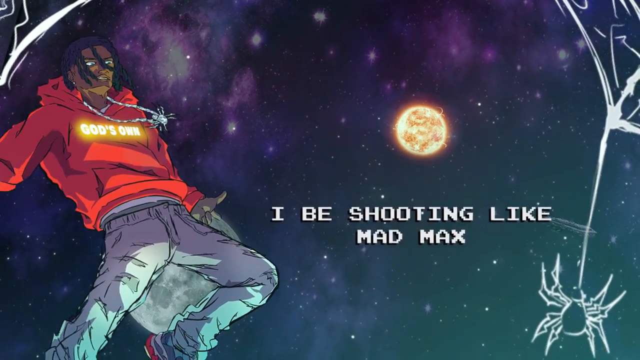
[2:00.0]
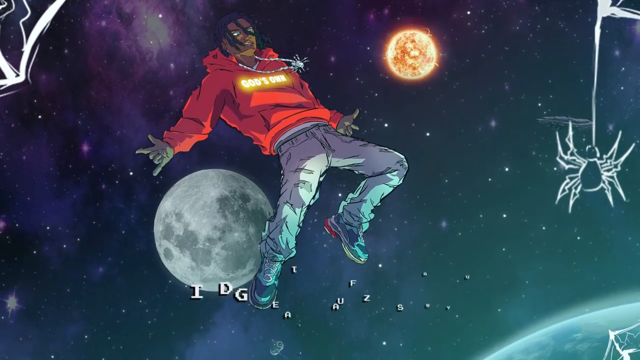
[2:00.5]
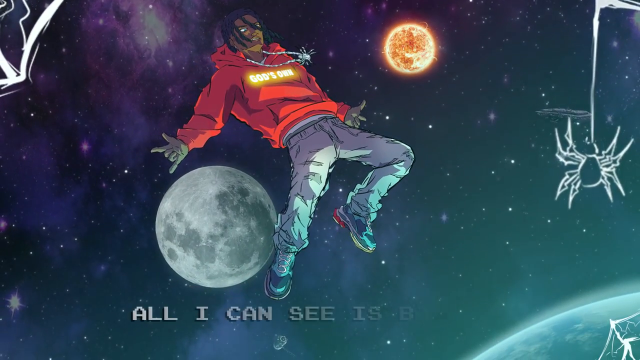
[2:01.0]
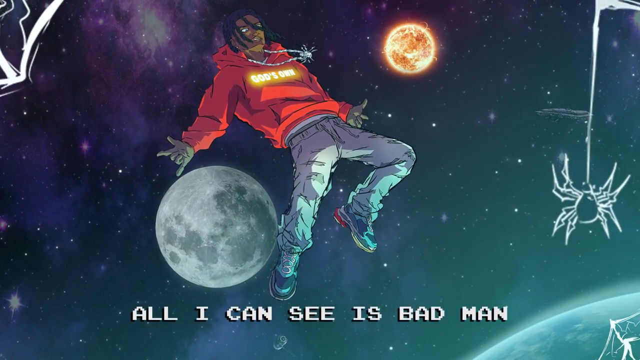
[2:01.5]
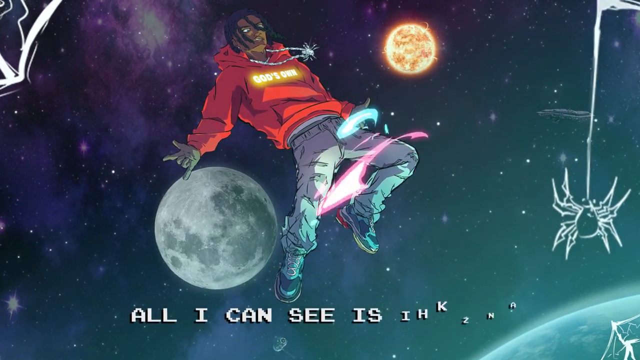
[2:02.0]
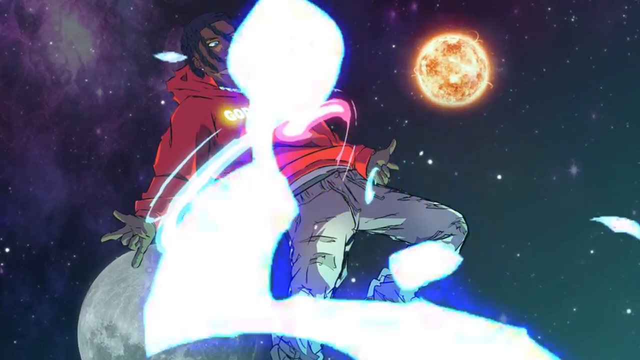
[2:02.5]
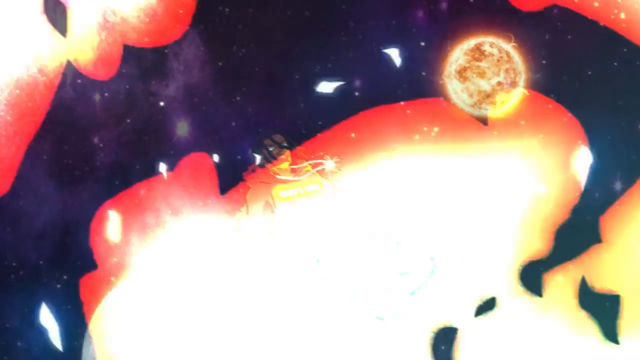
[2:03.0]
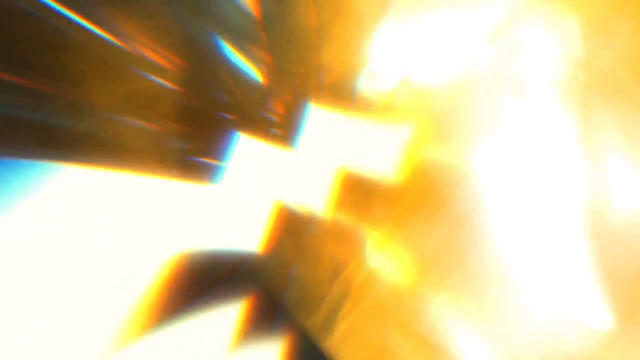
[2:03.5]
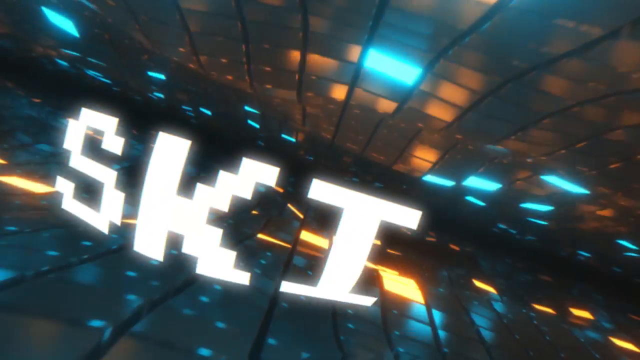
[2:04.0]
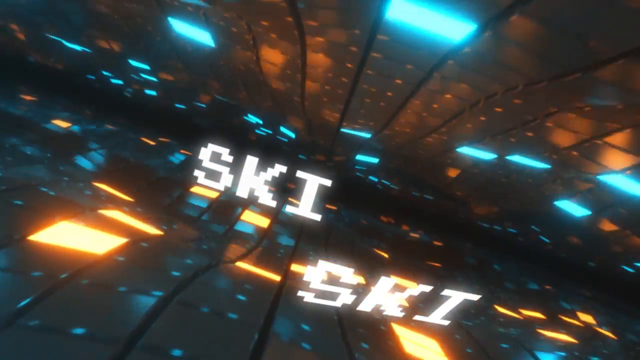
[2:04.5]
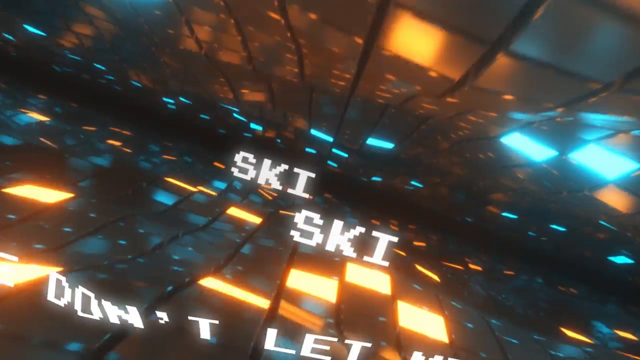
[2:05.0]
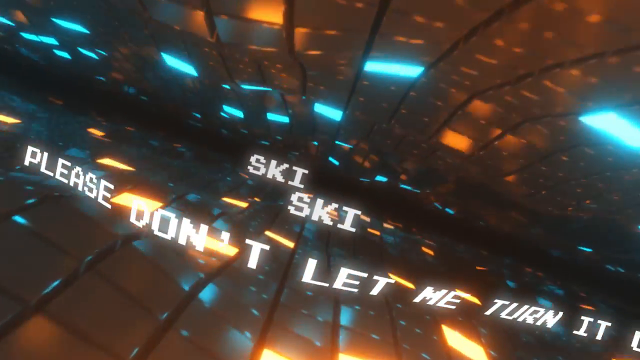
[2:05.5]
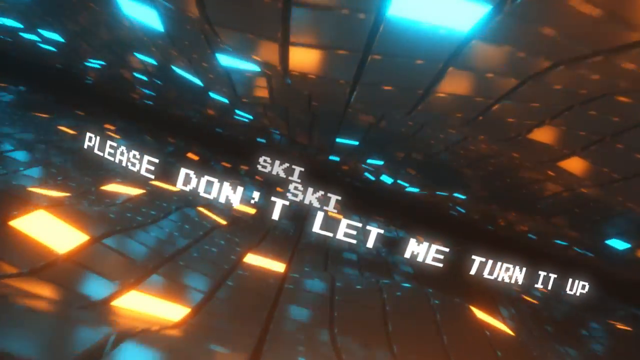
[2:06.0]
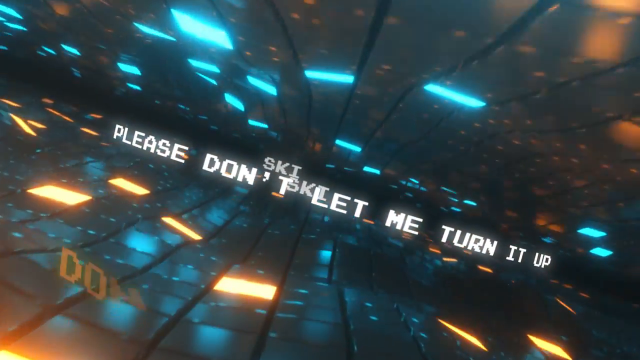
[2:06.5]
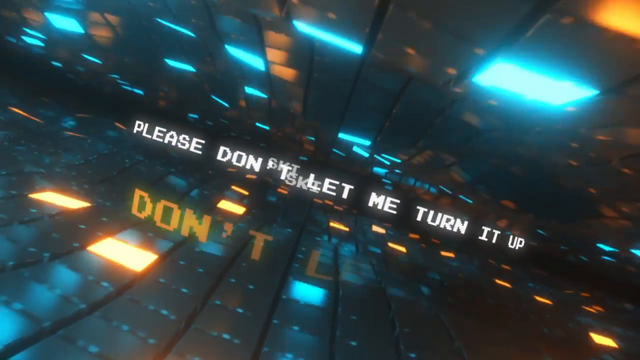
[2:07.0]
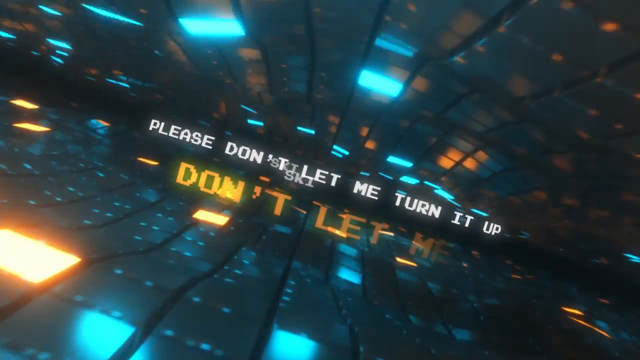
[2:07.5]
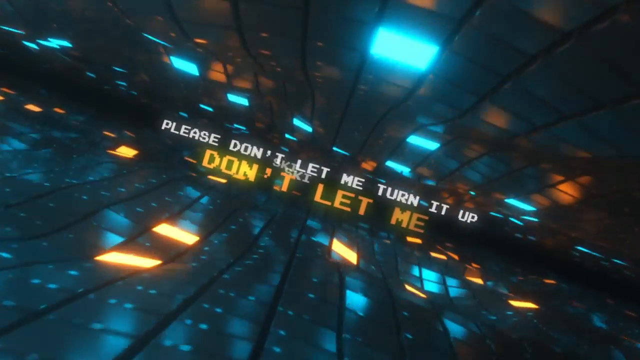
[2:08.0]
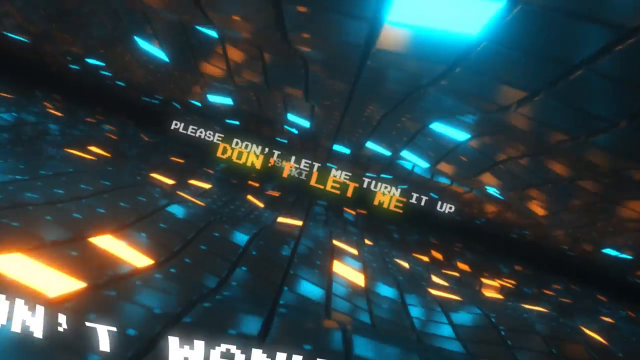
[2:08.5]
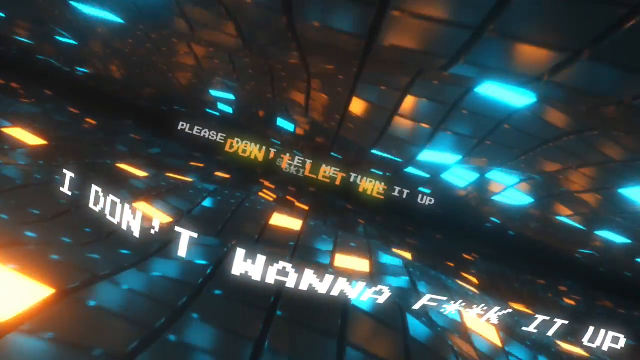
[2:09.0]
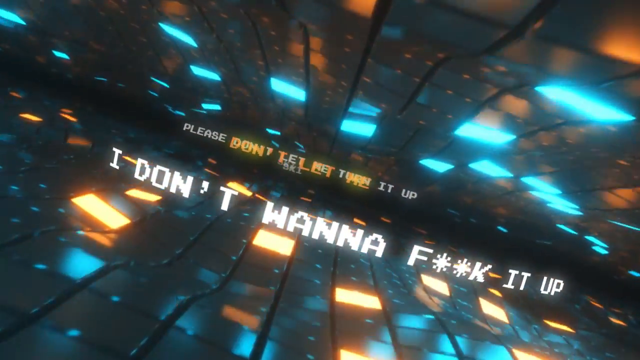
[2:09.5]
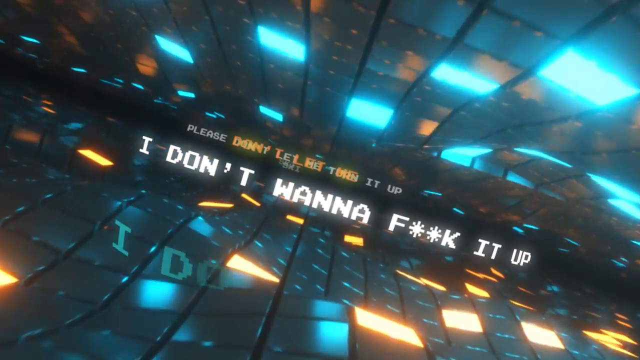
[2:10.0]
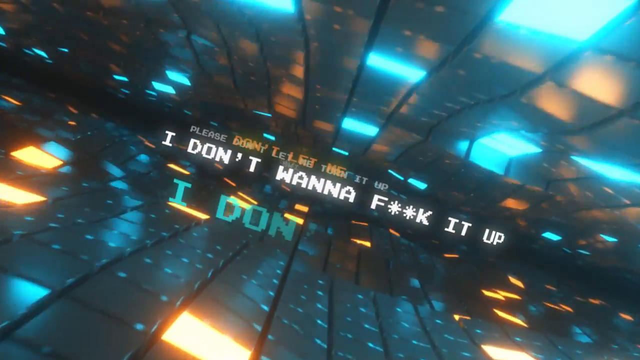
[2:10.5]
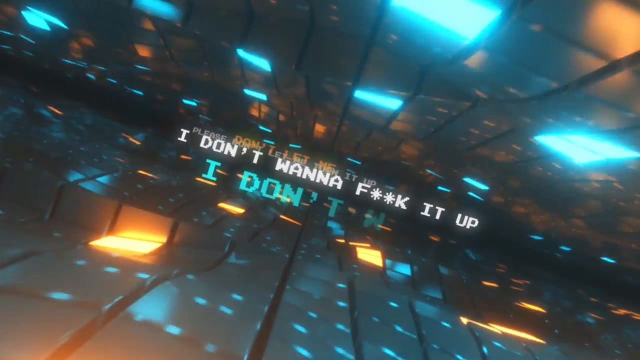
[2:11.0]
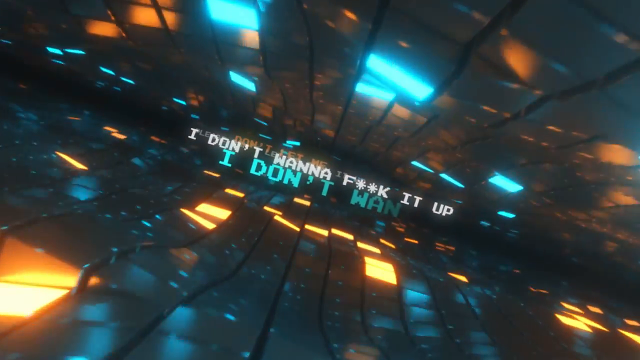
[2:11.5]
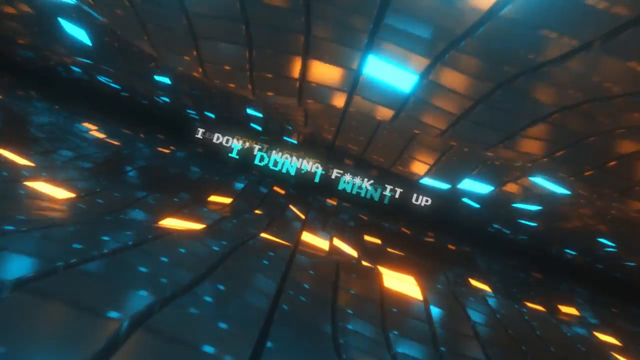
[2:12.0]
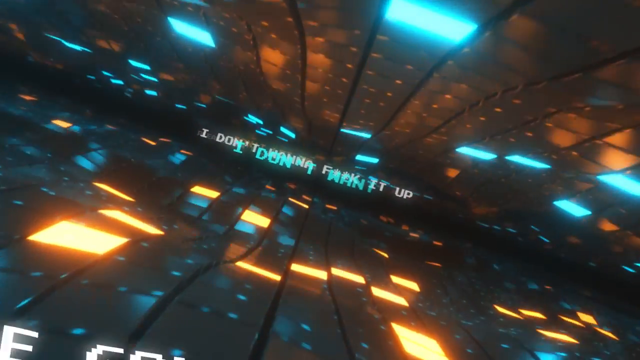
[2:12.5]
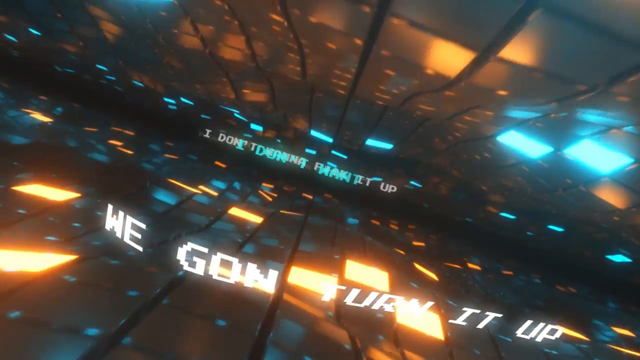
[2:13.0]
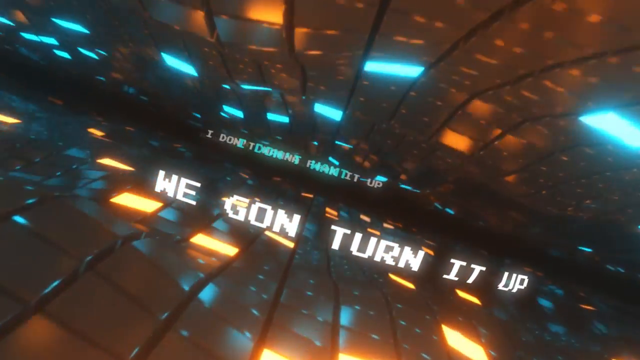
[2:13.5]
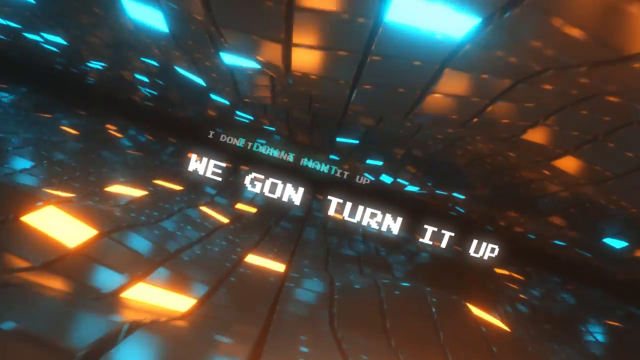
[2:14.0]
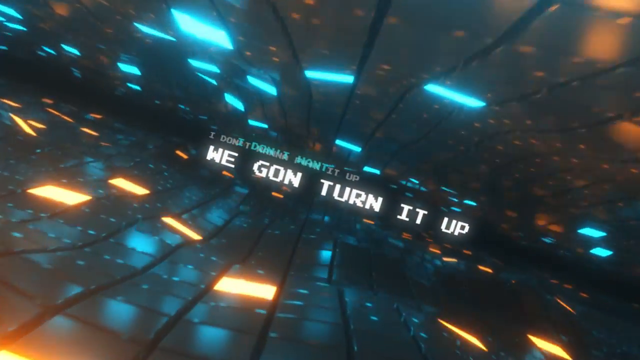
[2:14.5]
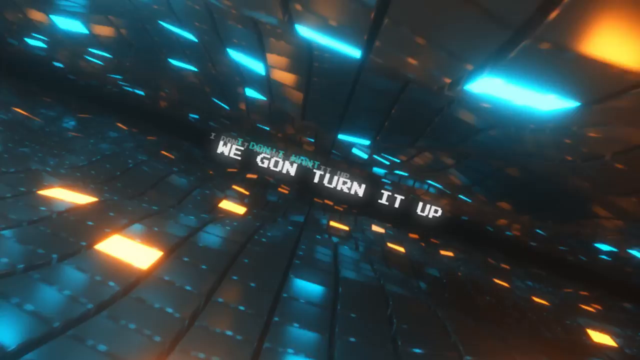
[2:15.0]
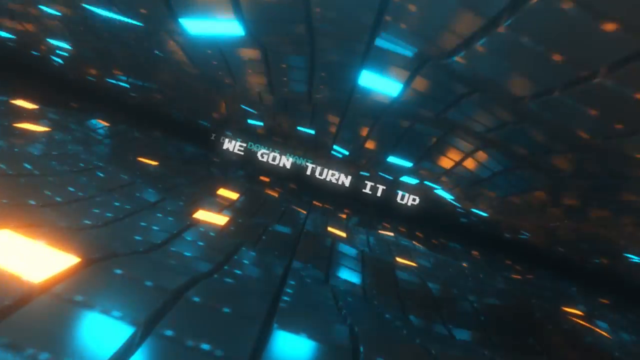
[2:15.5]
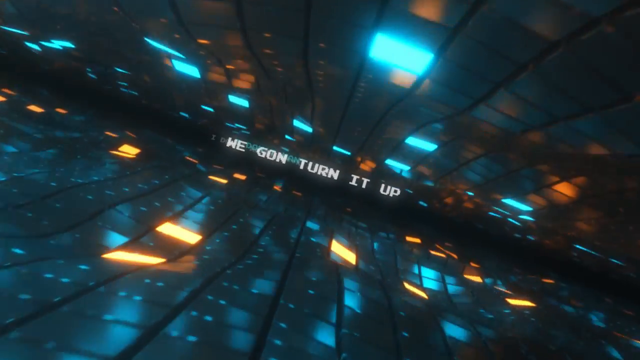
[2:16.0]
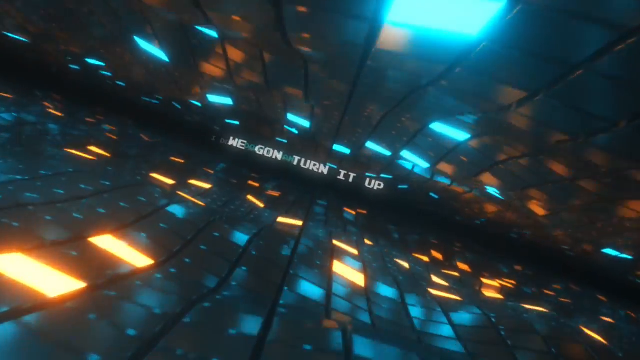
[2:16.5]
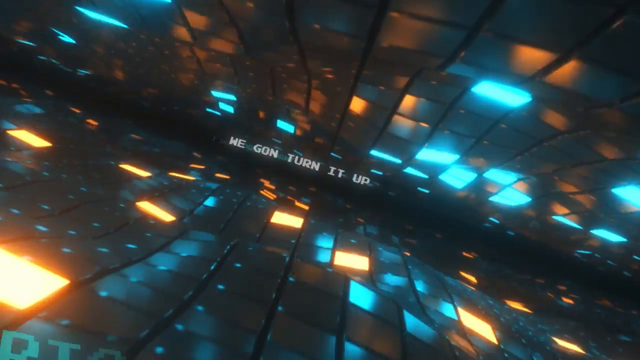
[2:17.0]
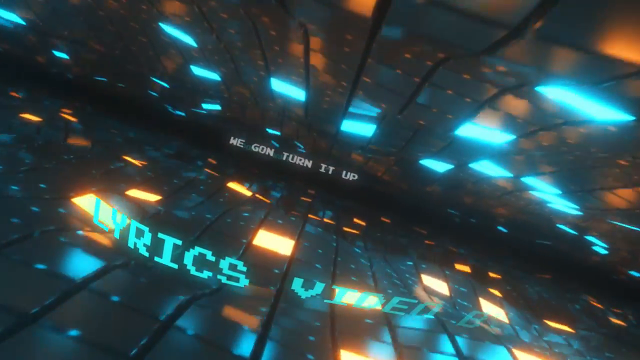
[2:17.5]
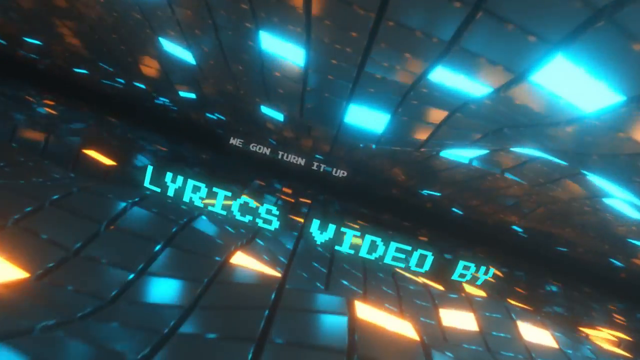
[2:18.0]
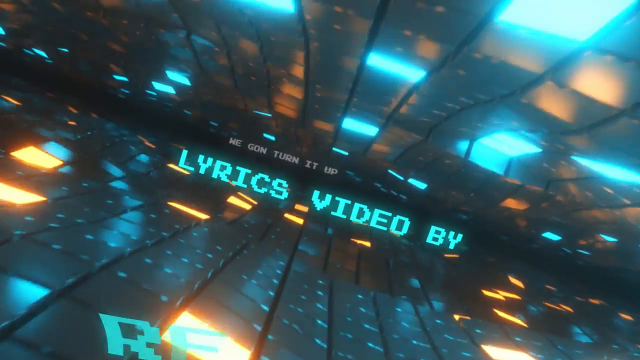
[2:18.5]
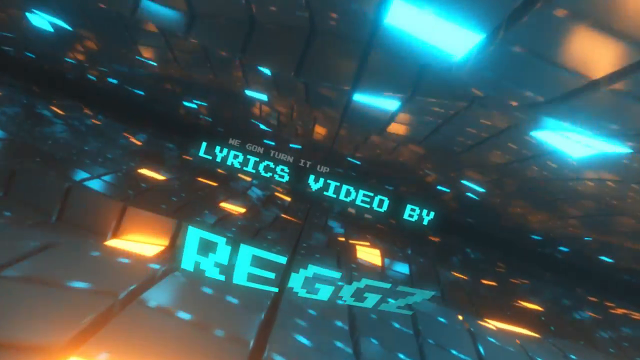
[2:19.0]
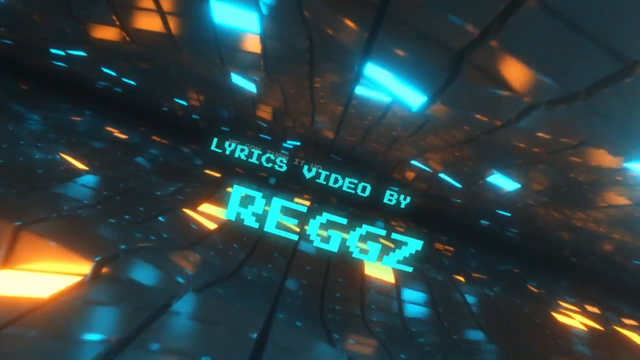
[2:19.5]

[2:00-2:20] The vibrant space scene continues until another bright light glitch leads into the wavy light tunnel of blue and orange lights on the ceiling and floor, set at an angle. This looks like it may be the ending credits. Text reads "SKI SKI please don't let me turn it up Don't let me I don't want to F*** it up," and then "Lyrics Video by Reggz." The ceiling and floor both move in waves, with the tiled lights waving through the scene.